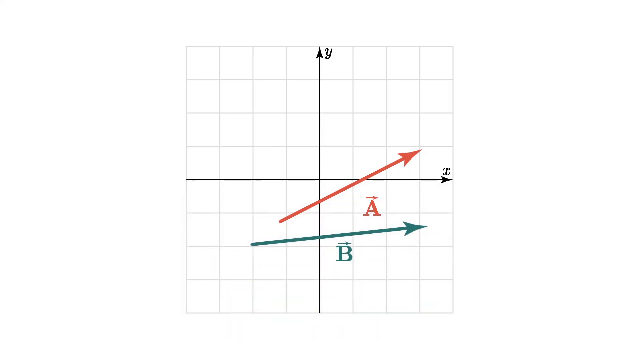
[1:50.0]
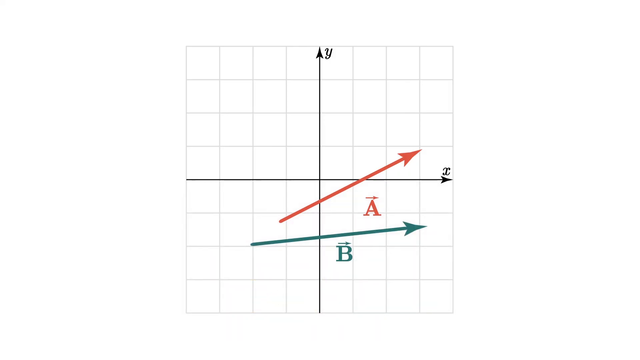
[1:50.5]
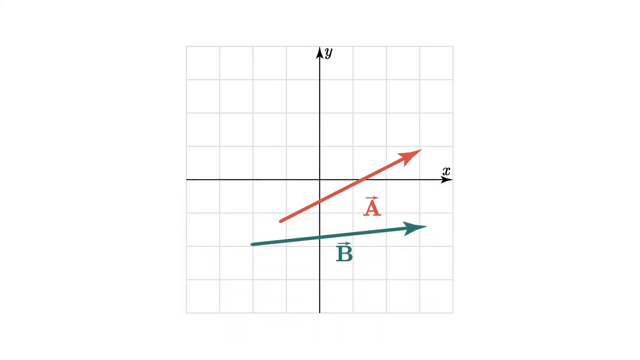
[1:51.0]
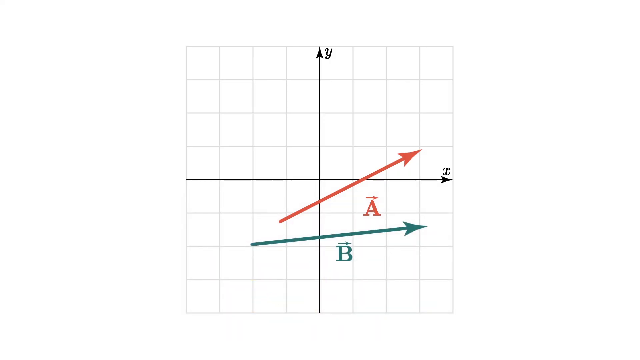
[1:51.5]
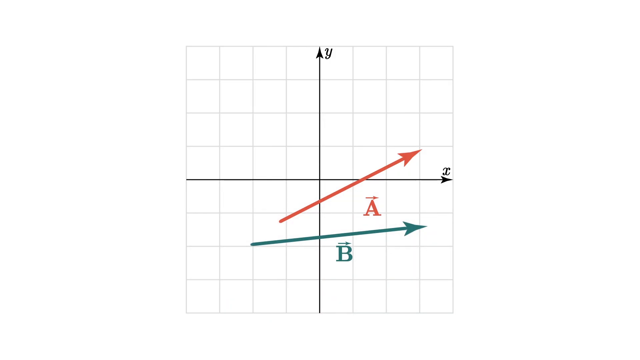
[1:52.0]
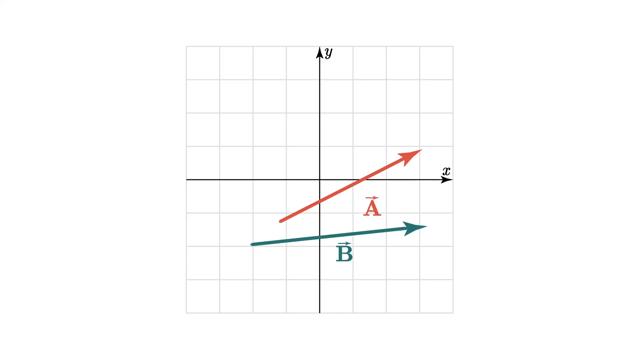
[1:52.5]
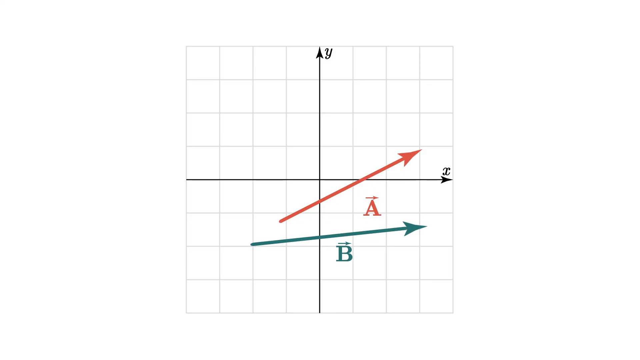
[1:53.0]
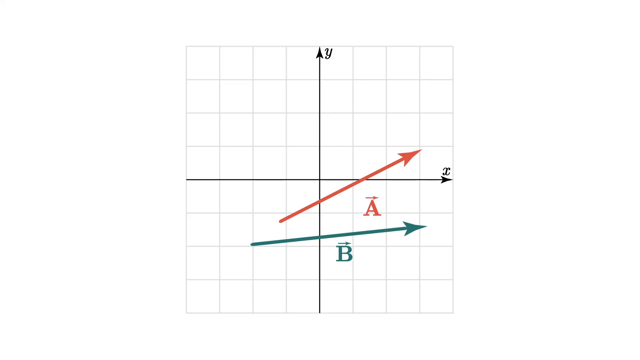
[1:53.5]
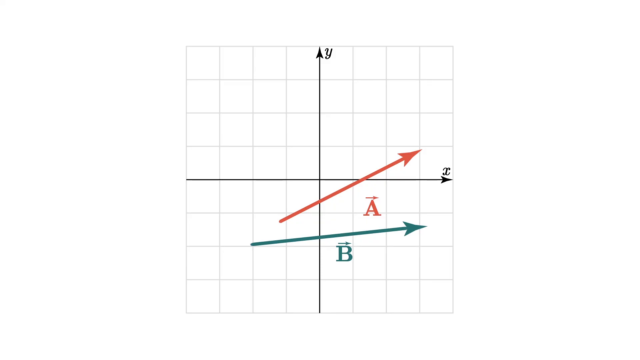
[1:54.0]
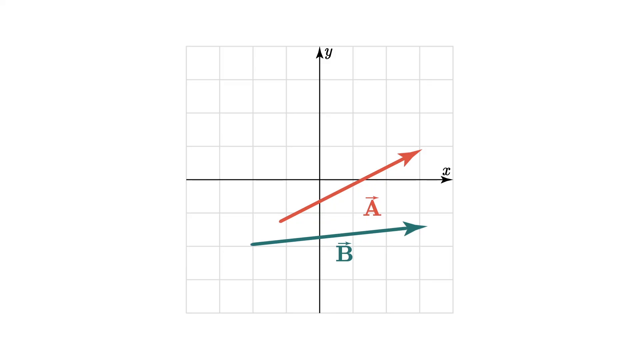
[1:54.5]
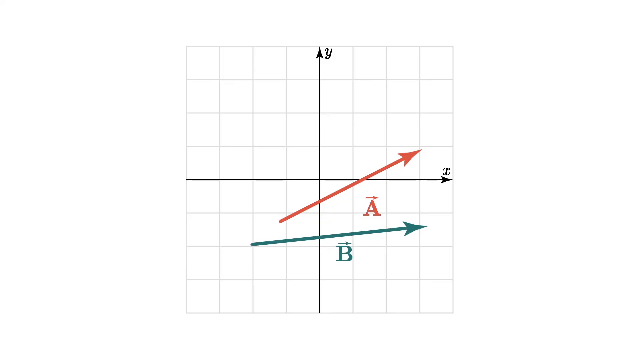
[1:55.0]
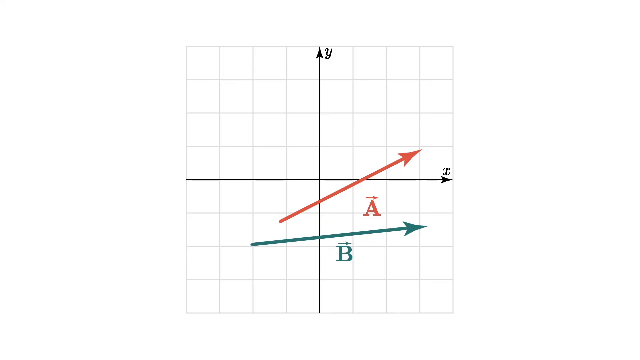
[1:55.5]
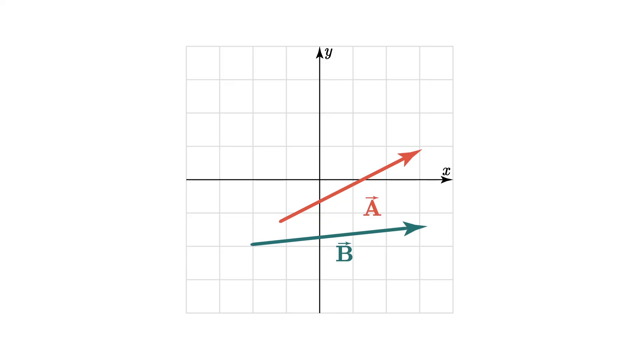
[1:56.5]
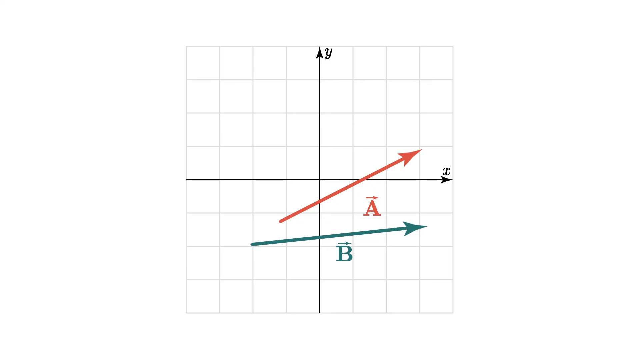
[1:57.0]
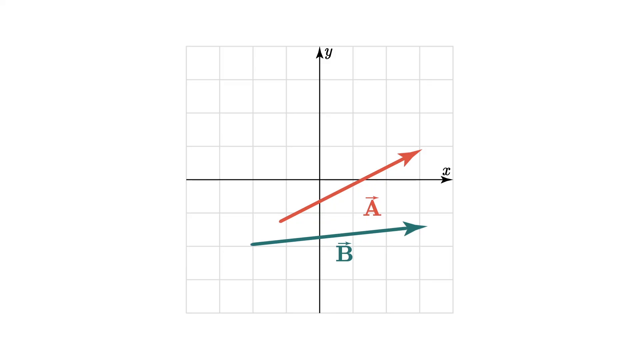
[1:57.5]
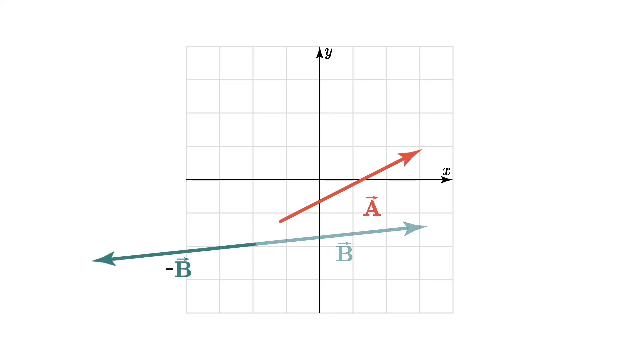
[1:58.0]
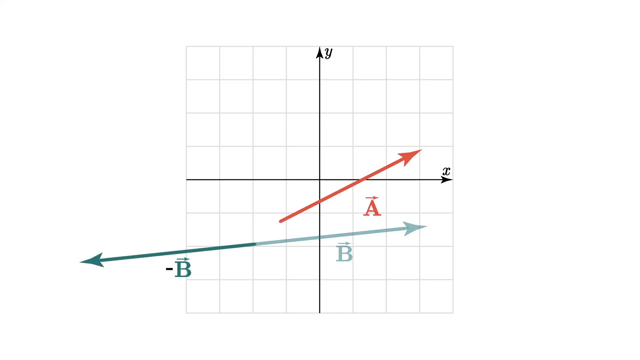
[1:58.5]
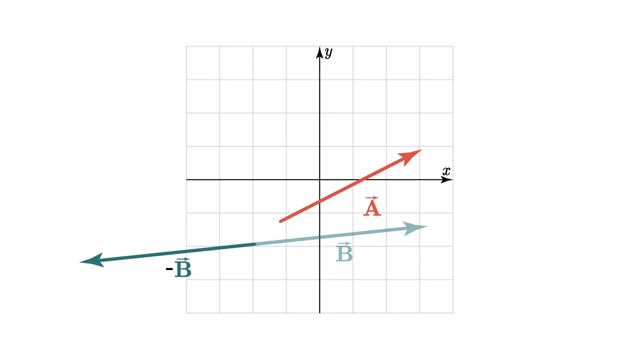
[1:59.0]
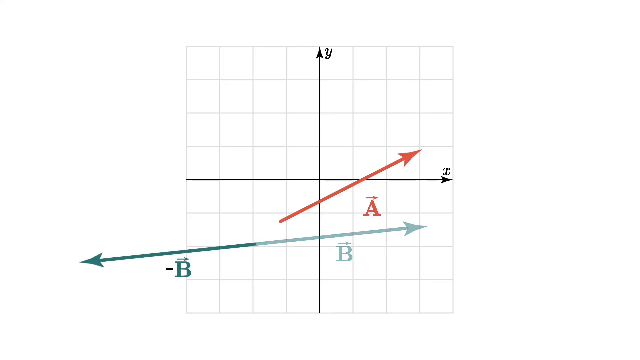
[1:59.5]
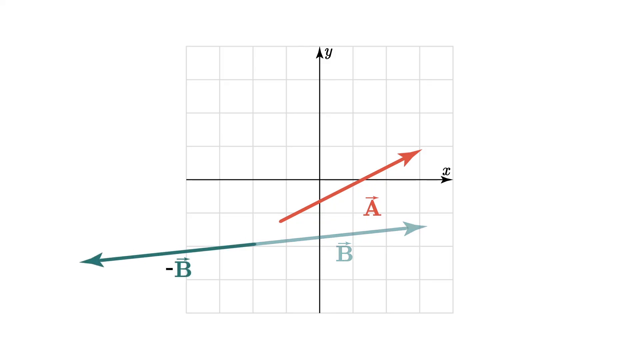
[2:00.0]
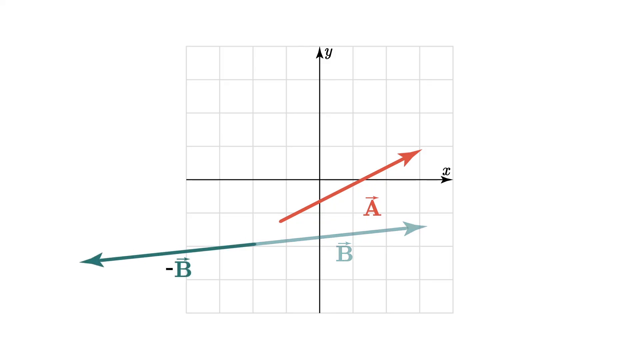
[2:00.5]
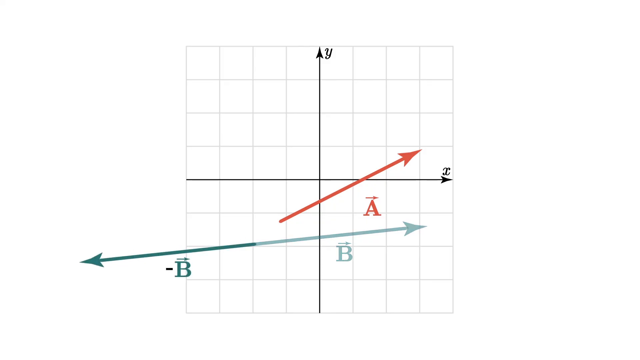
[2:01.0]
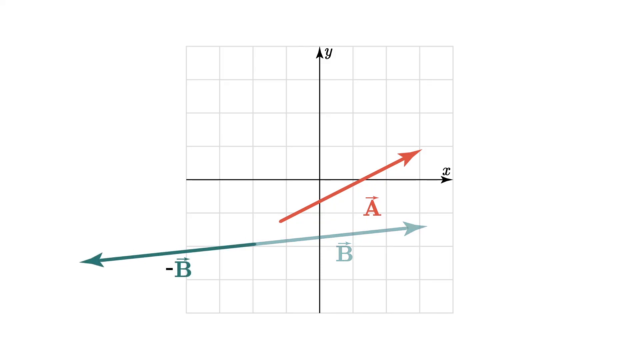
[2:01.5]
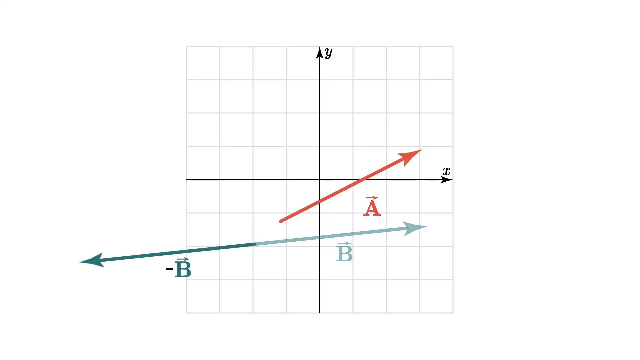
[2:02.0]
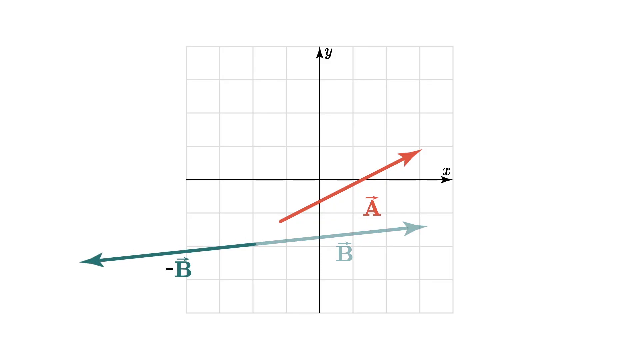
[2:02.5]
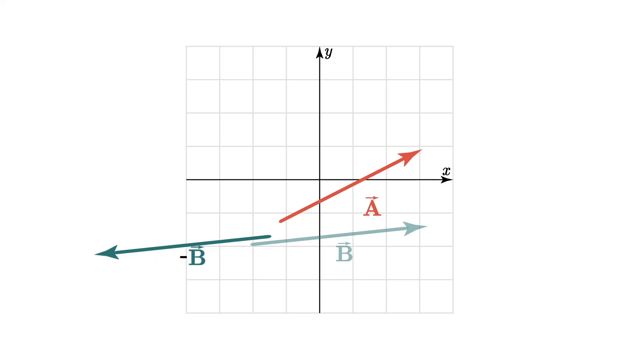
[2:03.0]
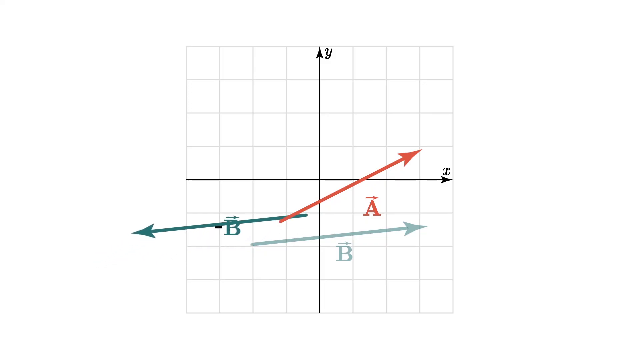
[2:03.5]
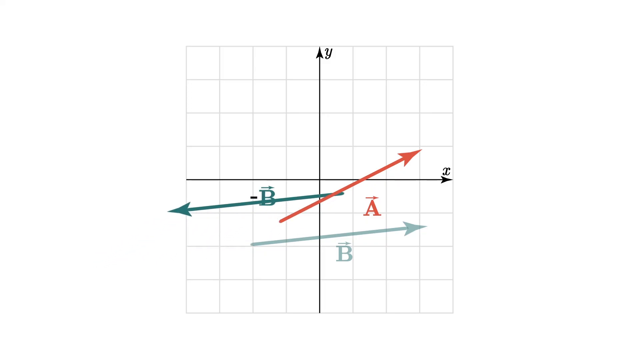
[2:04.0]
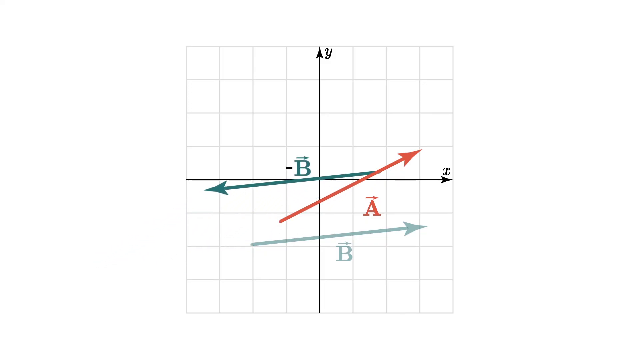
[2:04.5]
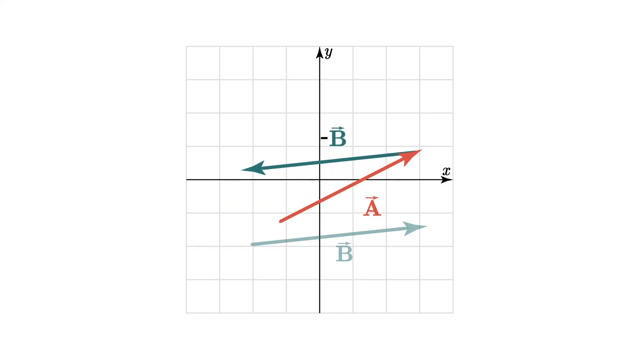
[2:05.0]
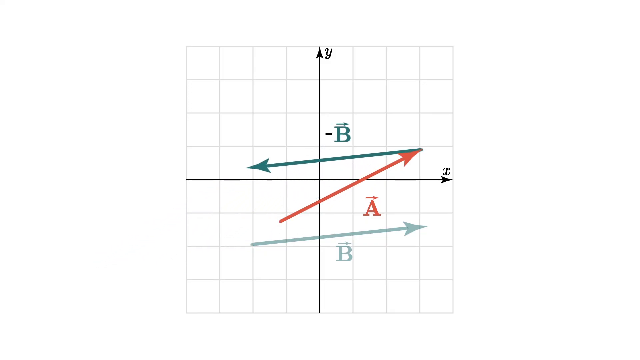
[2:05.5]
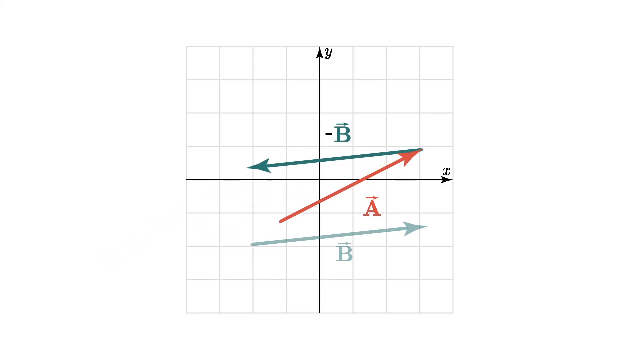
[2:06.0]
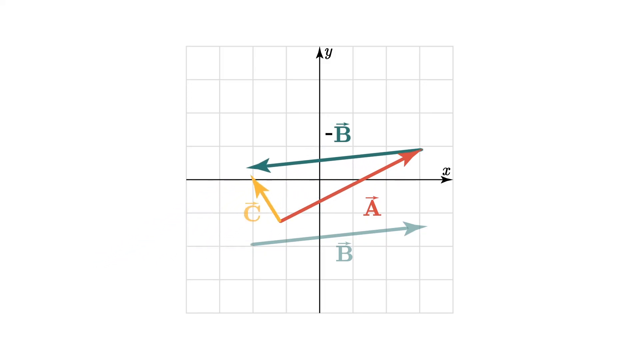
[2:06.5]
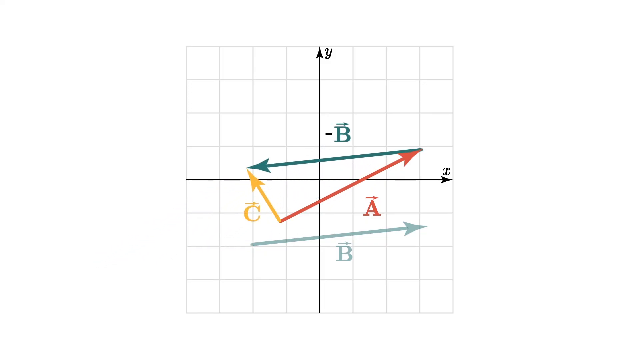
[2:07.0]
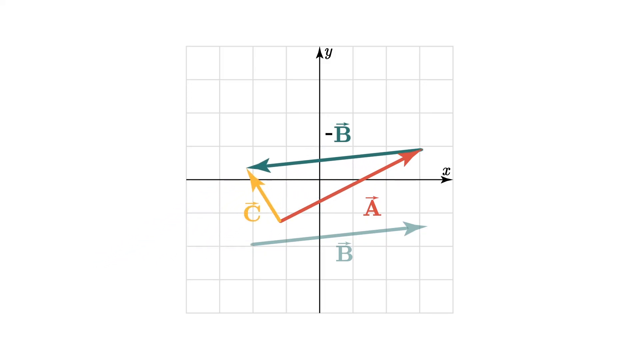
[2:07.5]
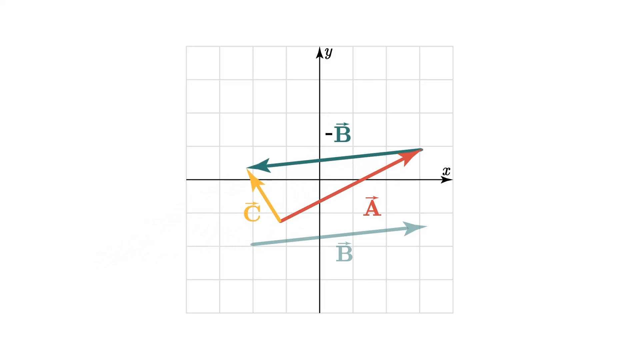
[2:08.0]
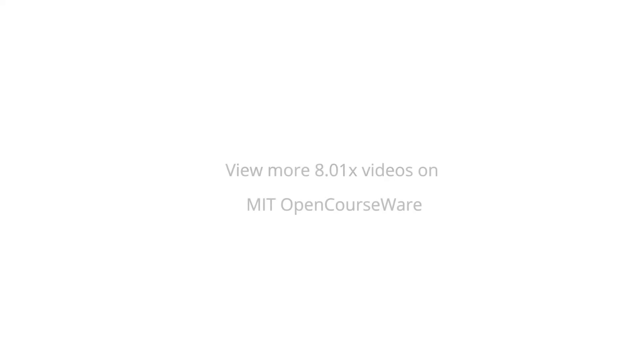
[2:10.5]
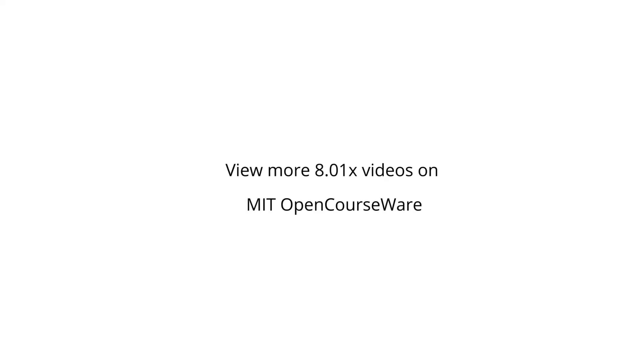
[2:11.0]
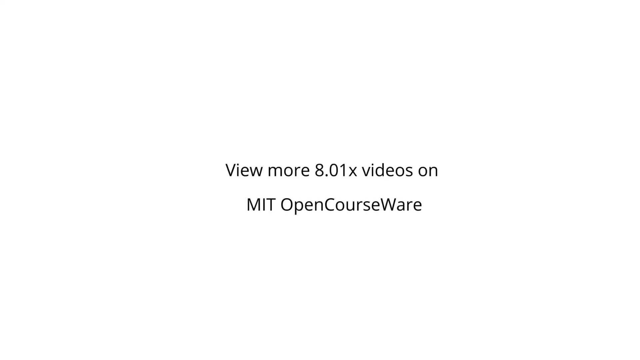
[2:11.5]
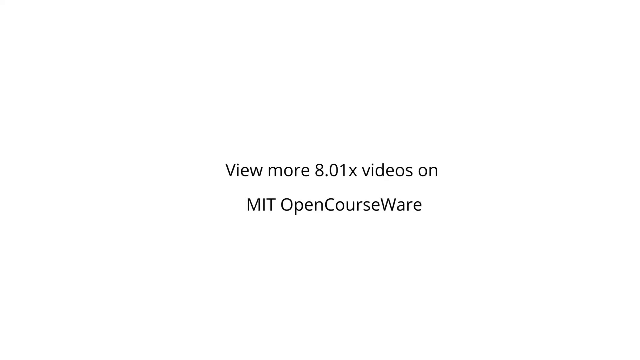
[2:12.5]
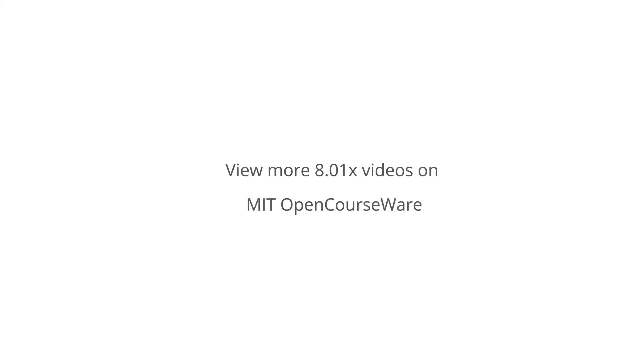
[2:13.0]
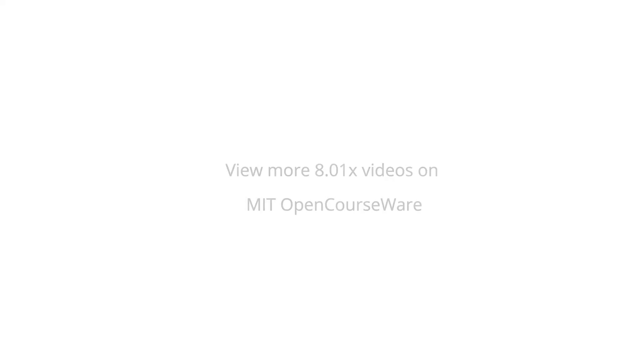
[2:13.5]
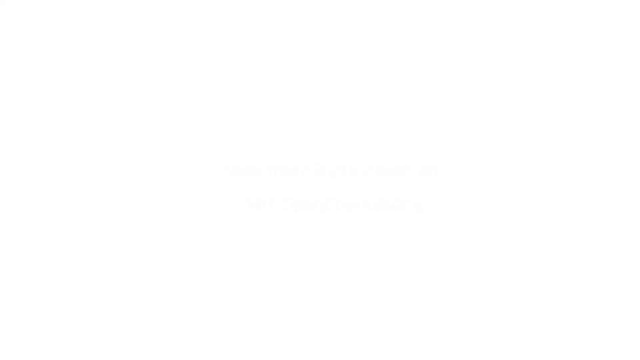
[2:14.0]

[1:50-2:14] This science video, called Vectors, shows grid paper eight squares across and eight going down with a black X and Y axis, and arrows labeled A and B. The top one starts in the second box down and over at the top, goes right through the X axis, runs from the second square through the third, and ends at the diagonal top of the third square, labeled A with an arrow going to the right. Then a teal B appears, starting the second square down and second square over in the negative part of the XY axis at the bottom, and going diagonally all the way through three squares. A new arrow pops up from where the original B vector apparently started, going right off the graph paper at the top of the third and fourth squares, labeled "negative B". That B arrow then moves all the way up to the point of the A arrow, across the negative top part of the XY axes, two squares to the beginning of the third.